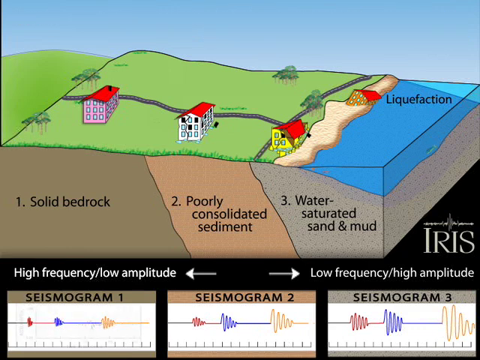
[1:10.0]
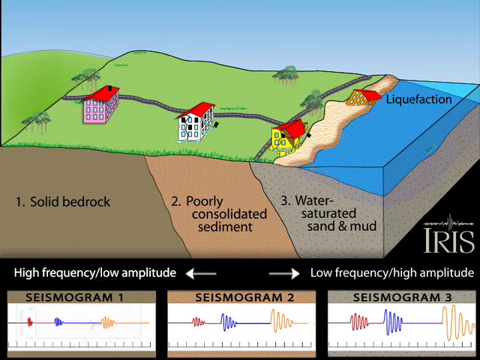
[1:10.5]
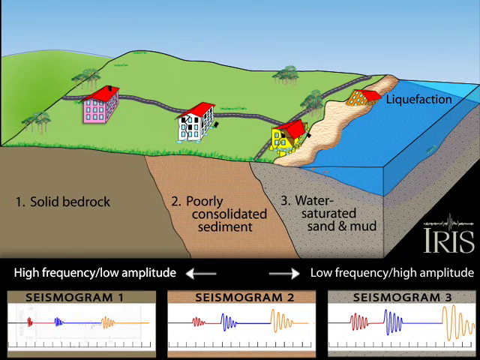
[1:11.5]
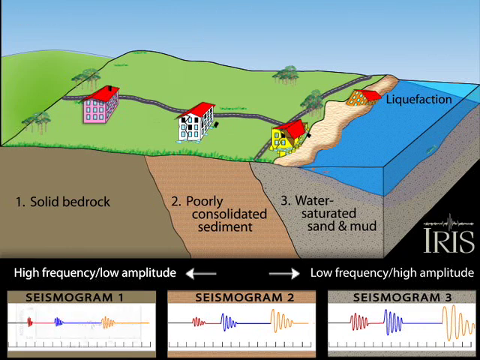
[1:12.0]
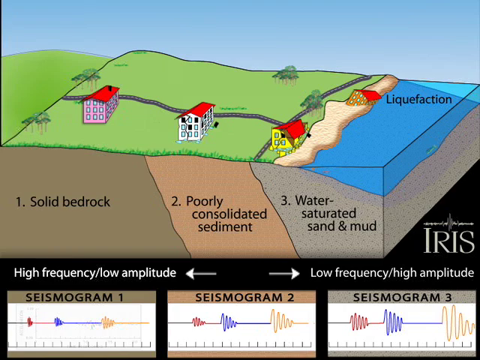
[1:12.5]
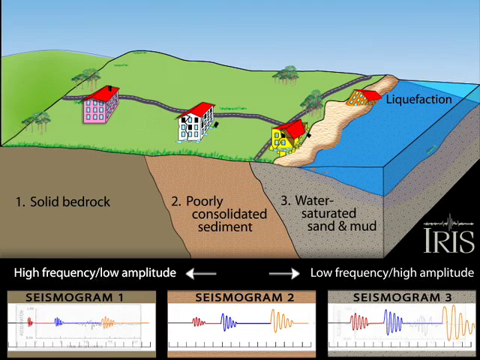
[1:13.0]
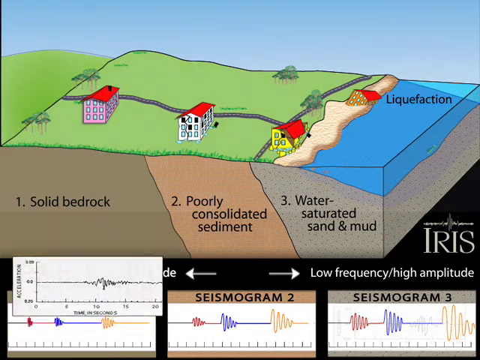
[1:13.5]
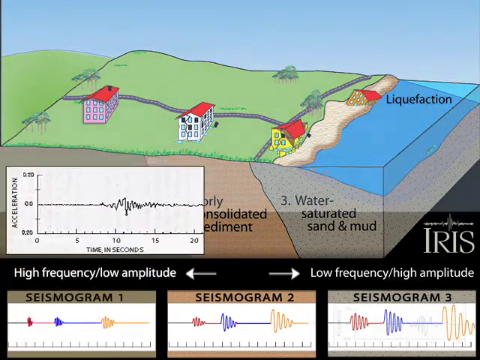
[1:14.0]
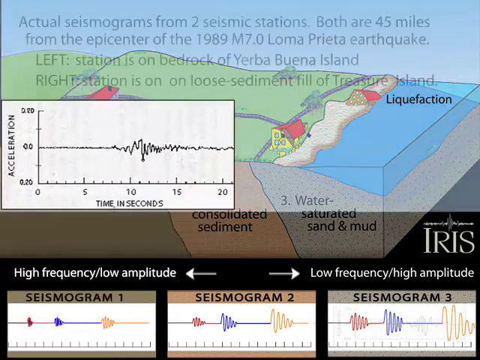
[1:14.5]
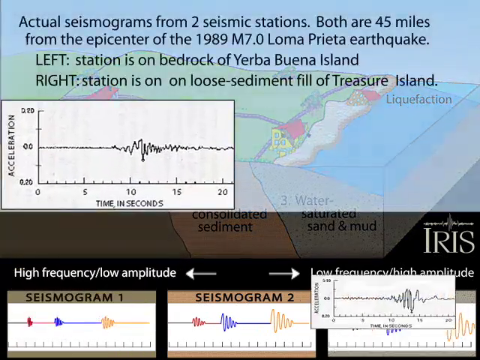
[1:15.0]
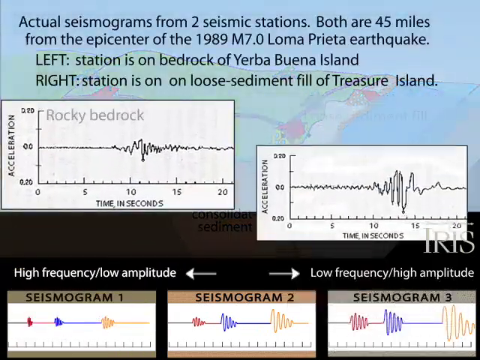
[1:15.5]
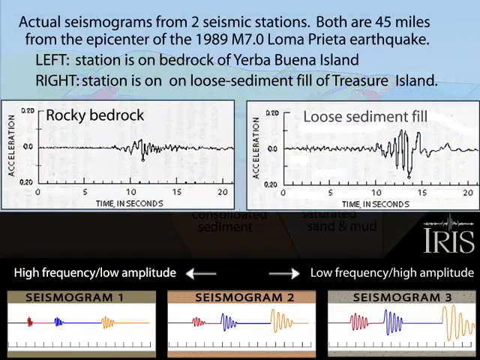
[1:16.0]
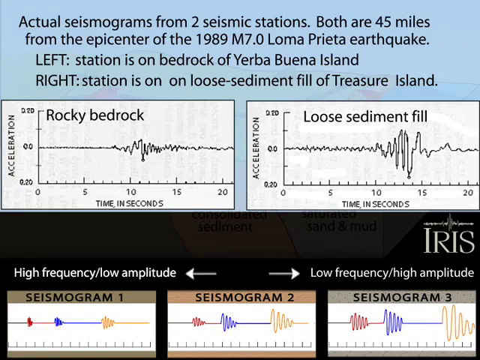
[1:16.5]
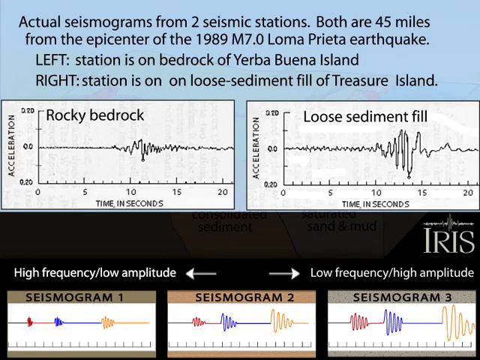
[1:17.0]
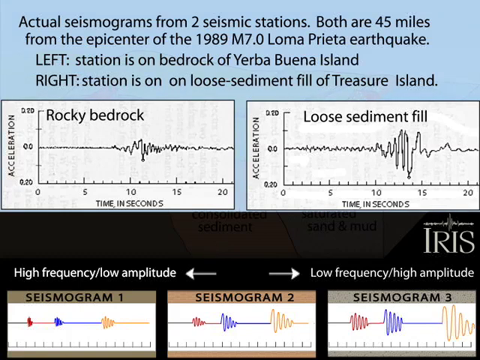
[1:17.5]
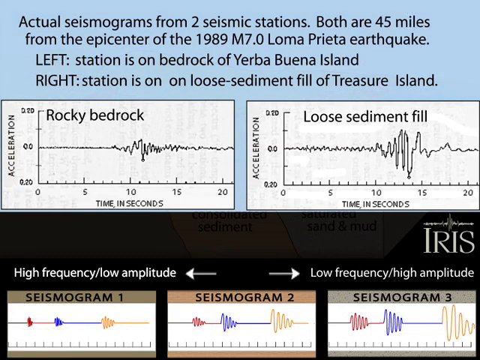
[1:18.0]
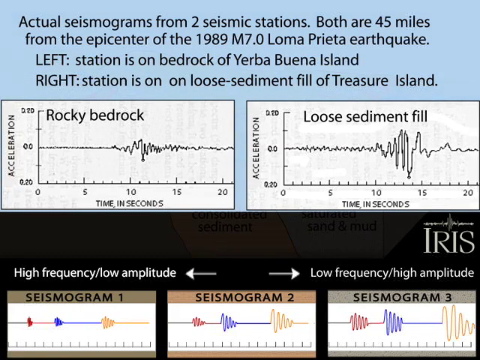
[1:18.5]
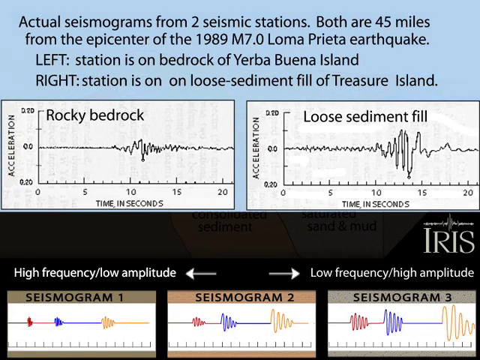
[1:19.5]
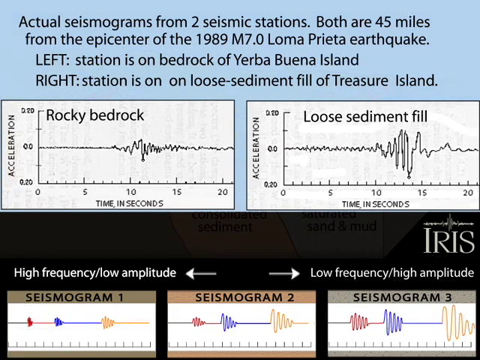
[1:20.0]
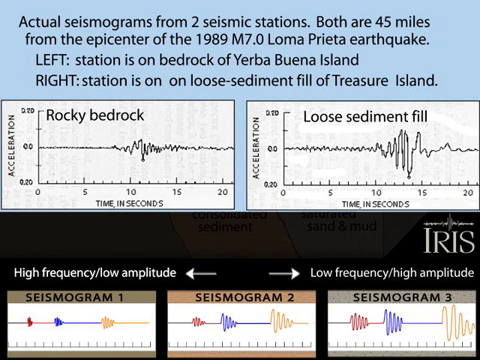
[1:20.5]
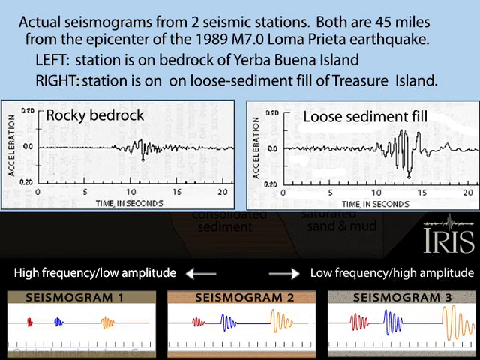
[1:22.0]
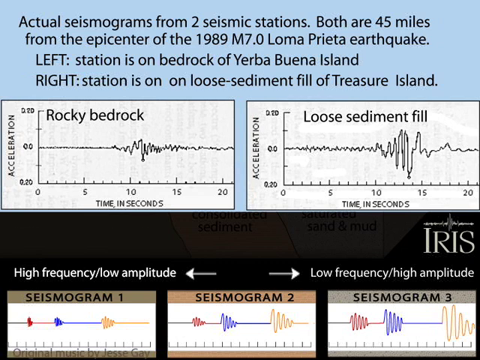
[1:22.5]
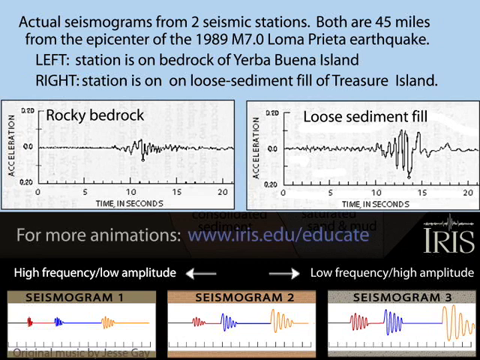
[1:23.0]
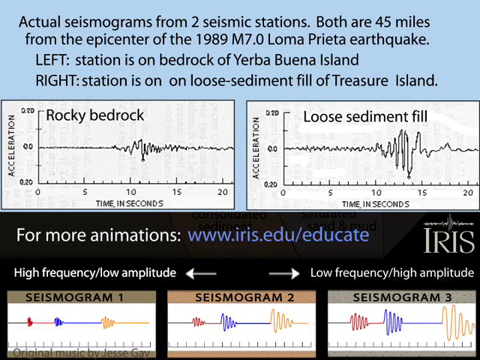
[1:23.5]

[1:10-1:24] After the liquefaction, four houses are shown: one that survived on the bedrock, one that was destroyed, one that was sort of torn apart, and one that sank into the ground. Comparisons pop up between rocky bedrock and sediment fill and what the seismograms show, with actual seismogram readings from two seismic stations.